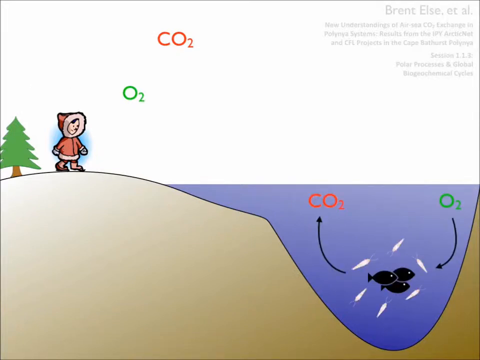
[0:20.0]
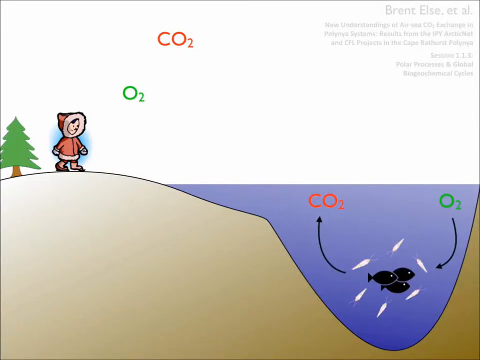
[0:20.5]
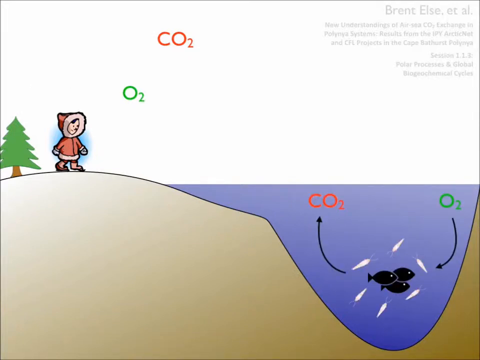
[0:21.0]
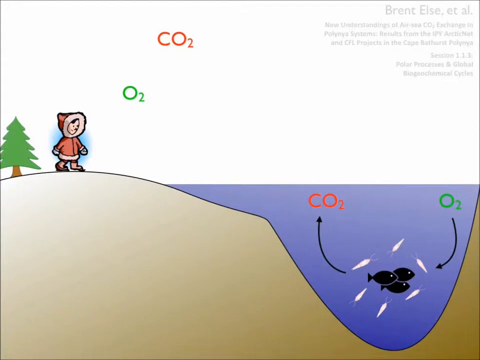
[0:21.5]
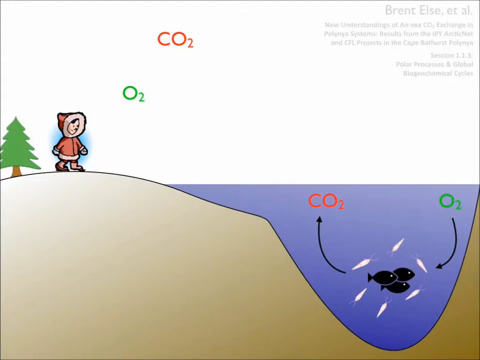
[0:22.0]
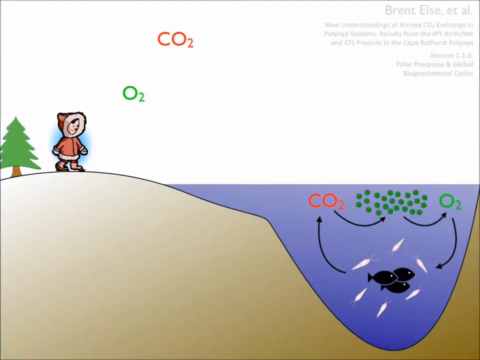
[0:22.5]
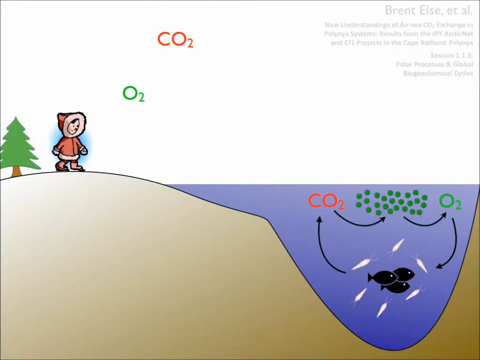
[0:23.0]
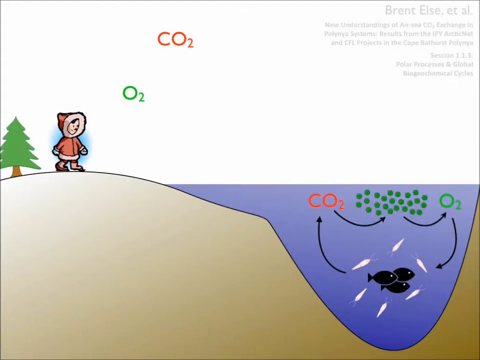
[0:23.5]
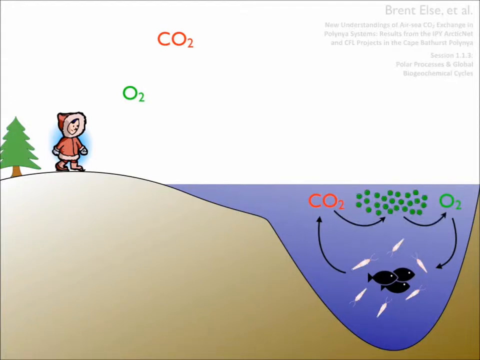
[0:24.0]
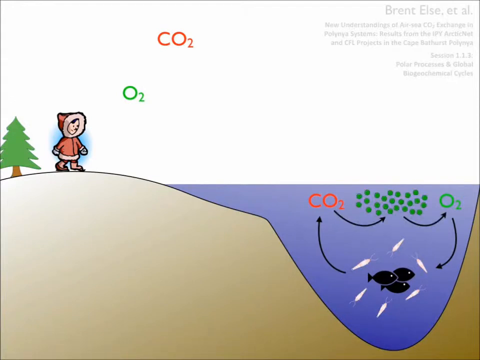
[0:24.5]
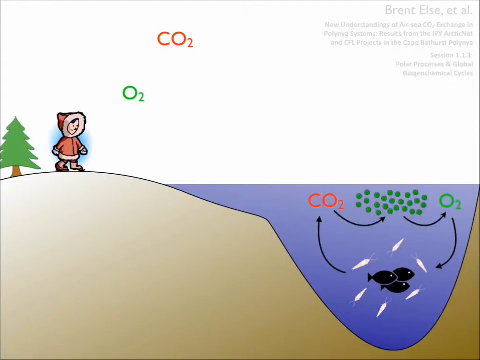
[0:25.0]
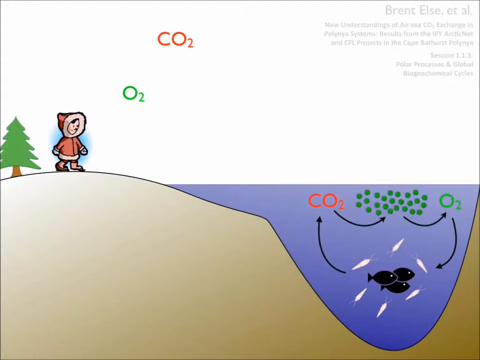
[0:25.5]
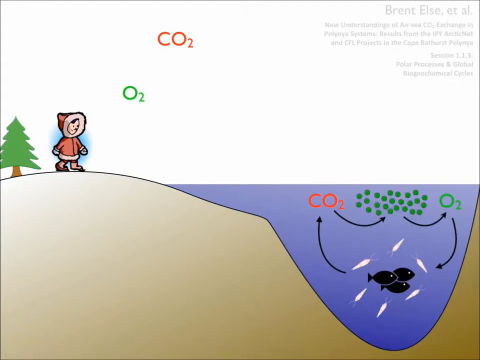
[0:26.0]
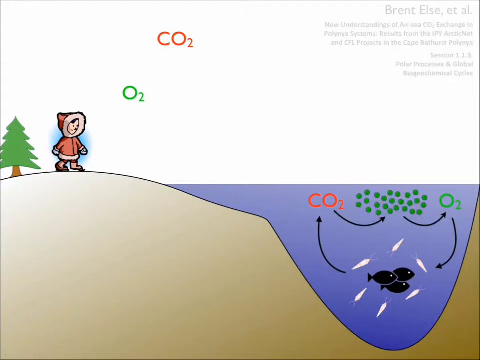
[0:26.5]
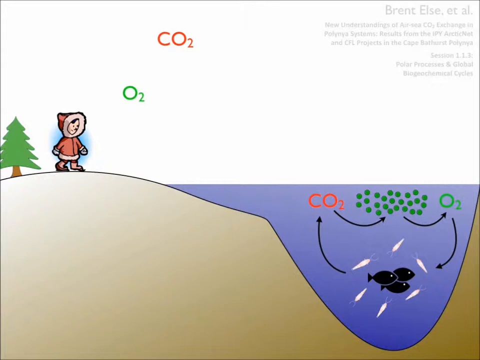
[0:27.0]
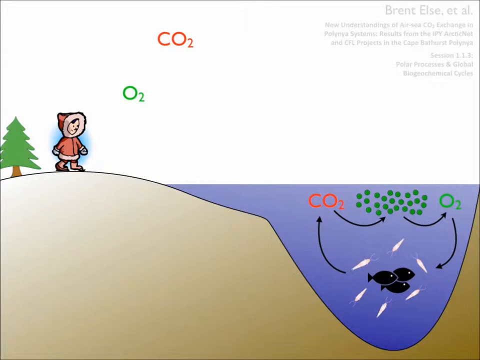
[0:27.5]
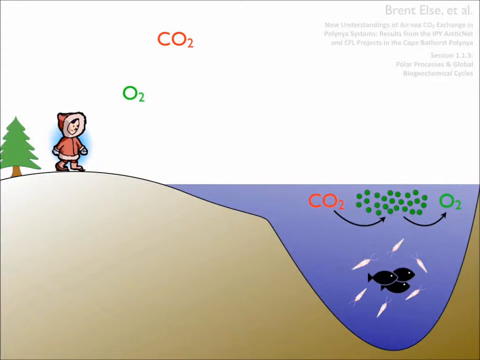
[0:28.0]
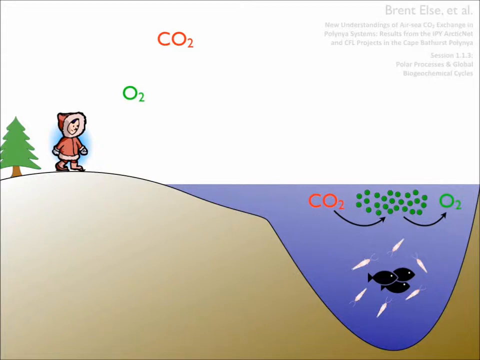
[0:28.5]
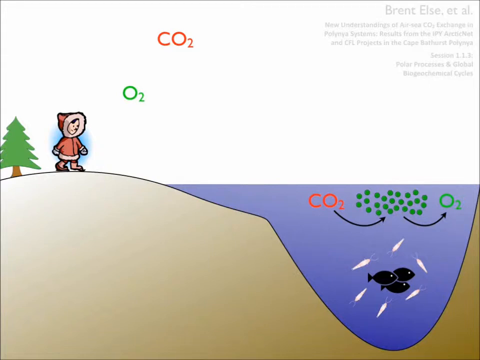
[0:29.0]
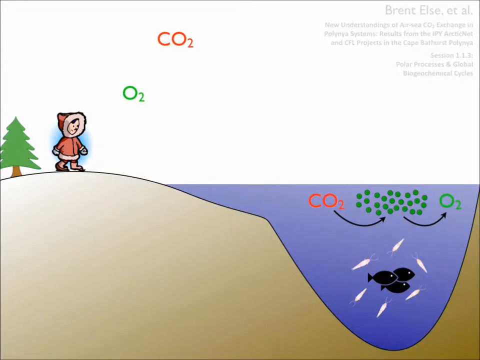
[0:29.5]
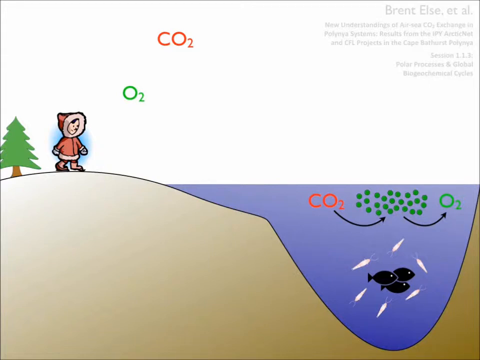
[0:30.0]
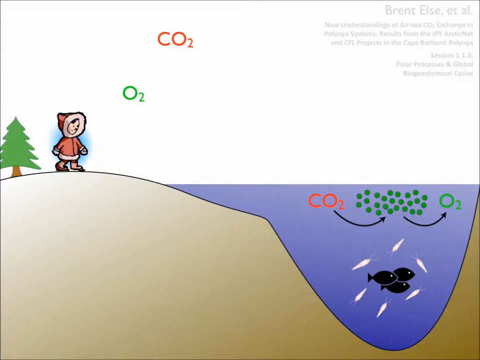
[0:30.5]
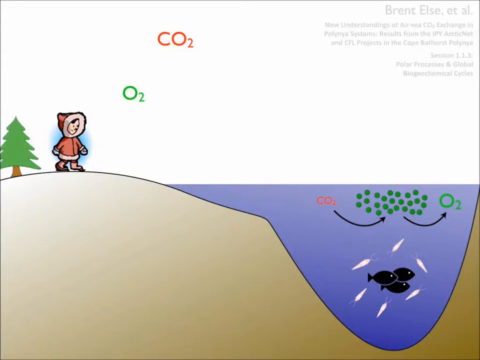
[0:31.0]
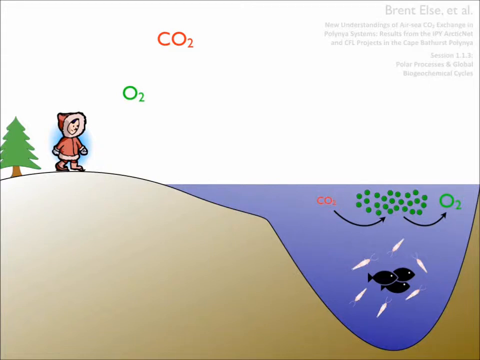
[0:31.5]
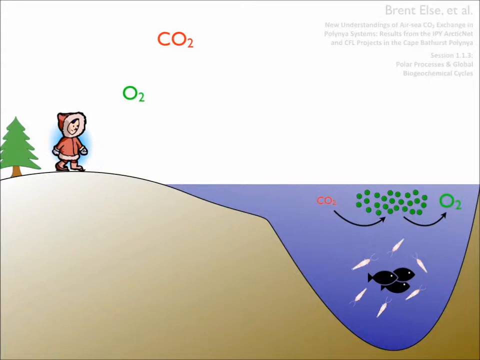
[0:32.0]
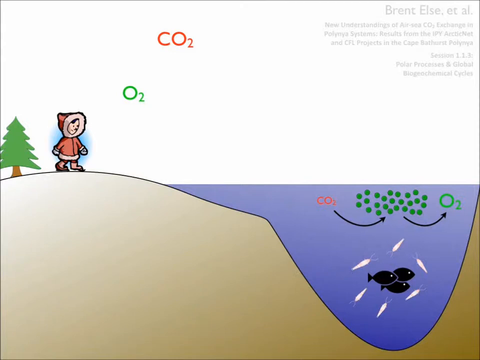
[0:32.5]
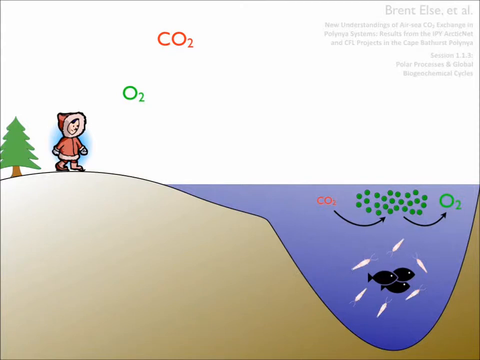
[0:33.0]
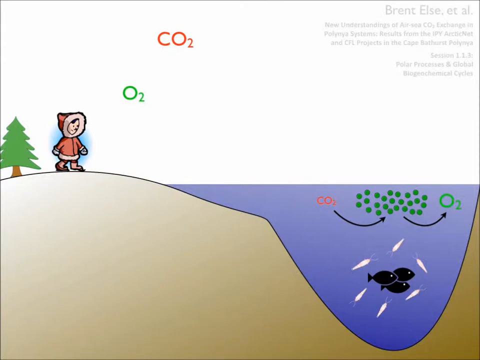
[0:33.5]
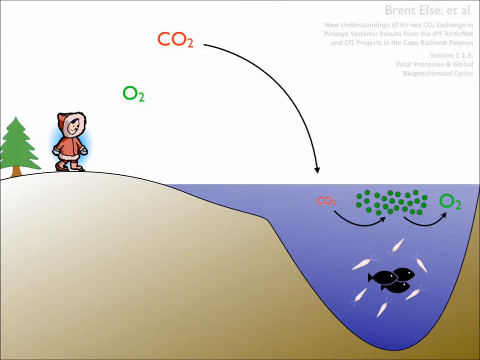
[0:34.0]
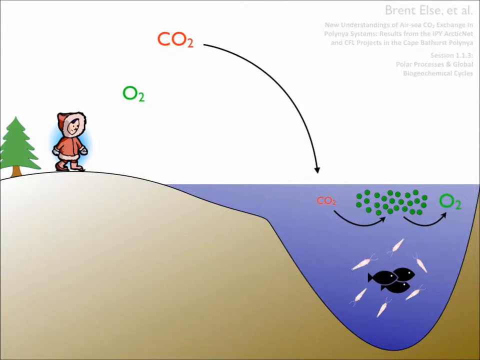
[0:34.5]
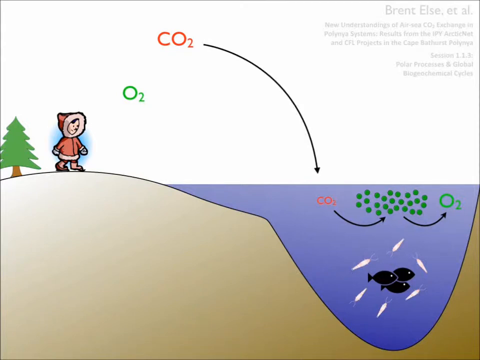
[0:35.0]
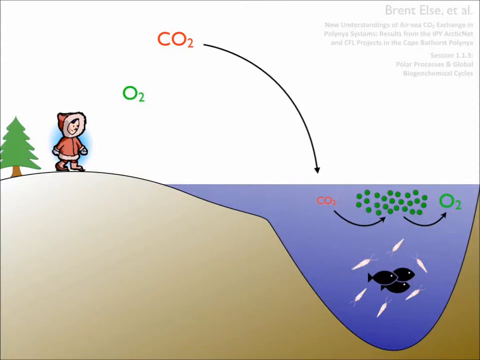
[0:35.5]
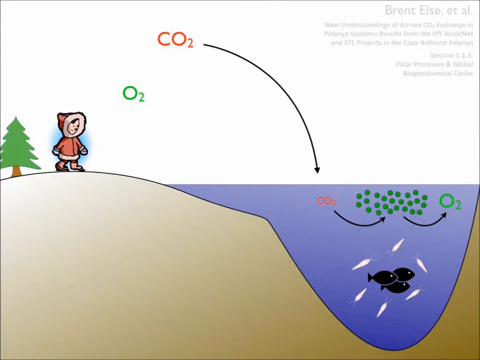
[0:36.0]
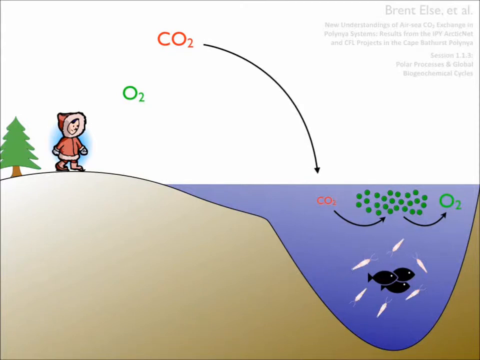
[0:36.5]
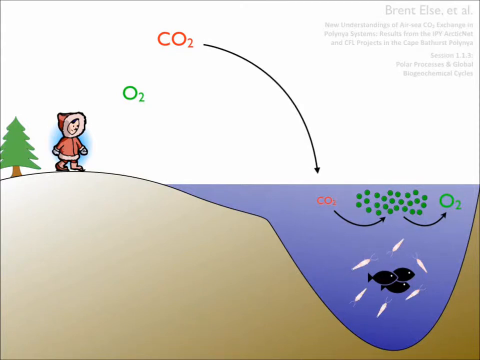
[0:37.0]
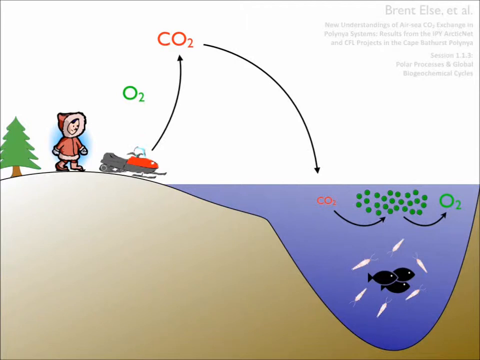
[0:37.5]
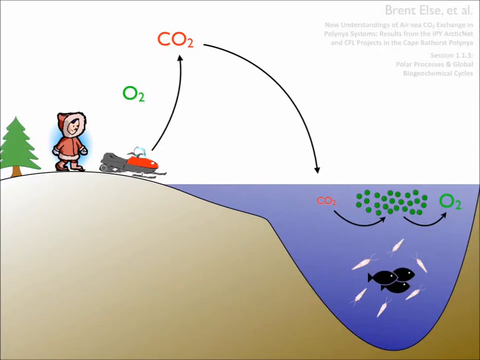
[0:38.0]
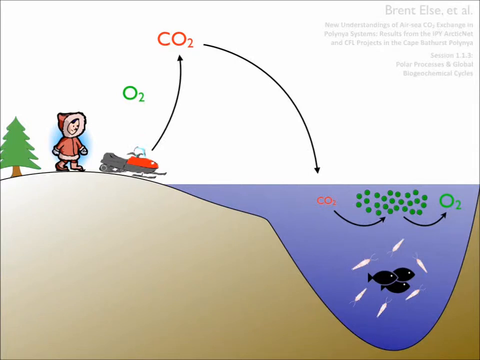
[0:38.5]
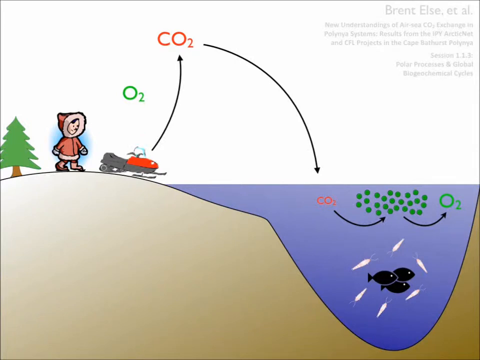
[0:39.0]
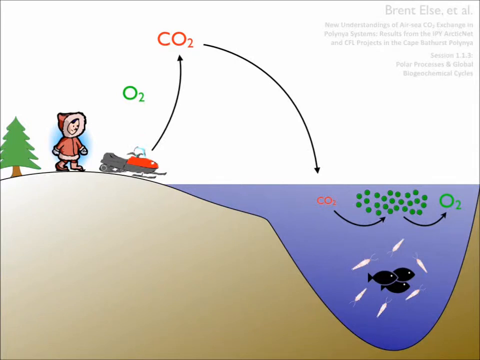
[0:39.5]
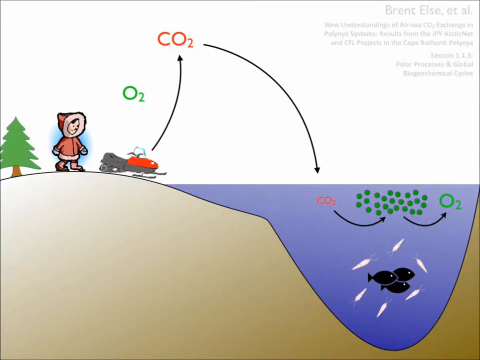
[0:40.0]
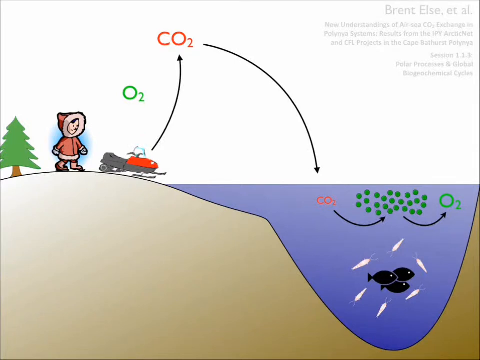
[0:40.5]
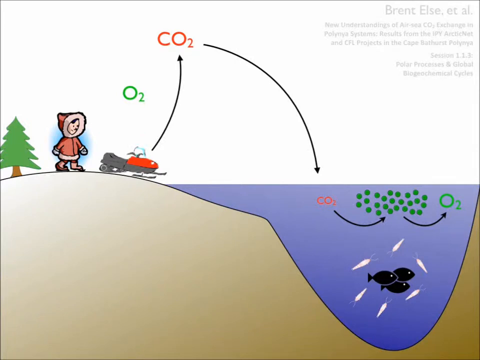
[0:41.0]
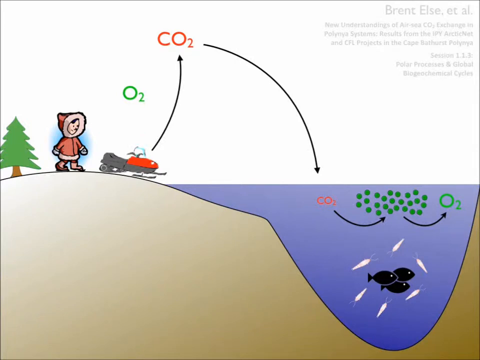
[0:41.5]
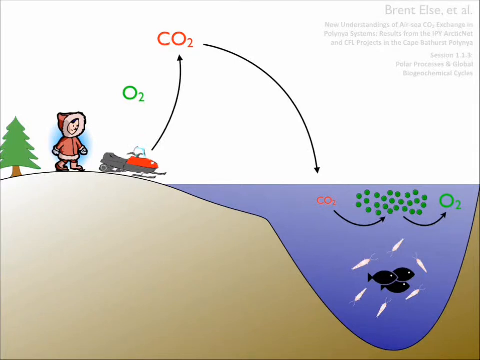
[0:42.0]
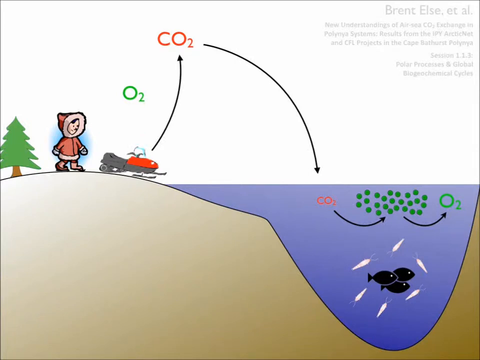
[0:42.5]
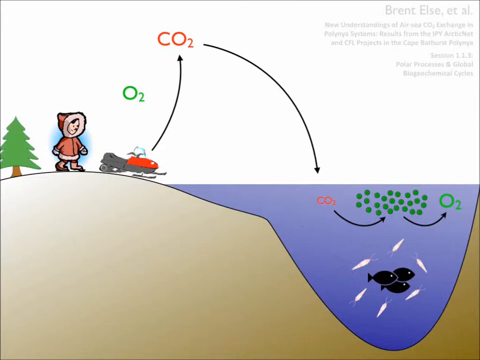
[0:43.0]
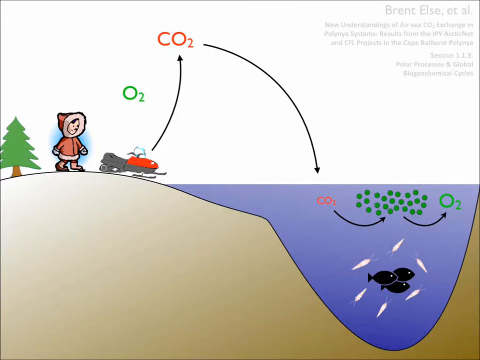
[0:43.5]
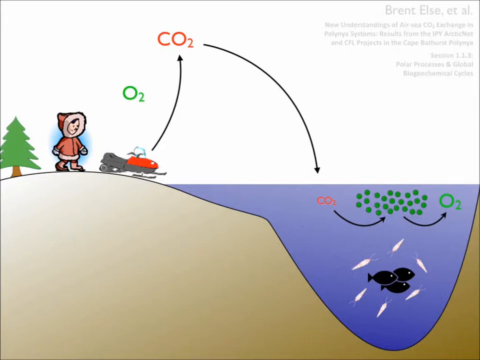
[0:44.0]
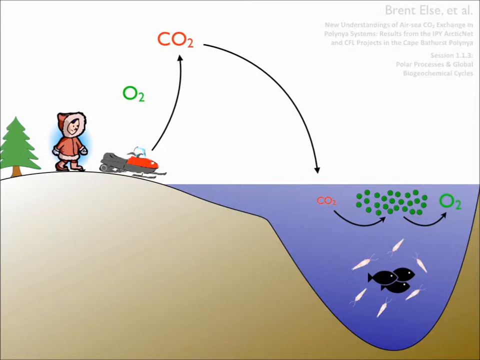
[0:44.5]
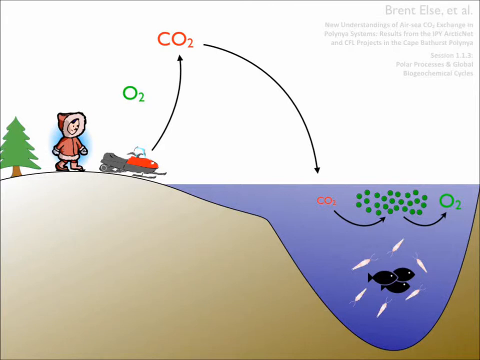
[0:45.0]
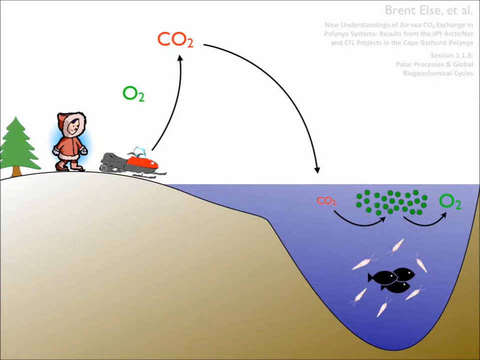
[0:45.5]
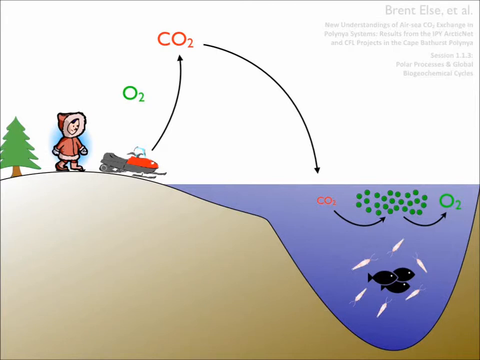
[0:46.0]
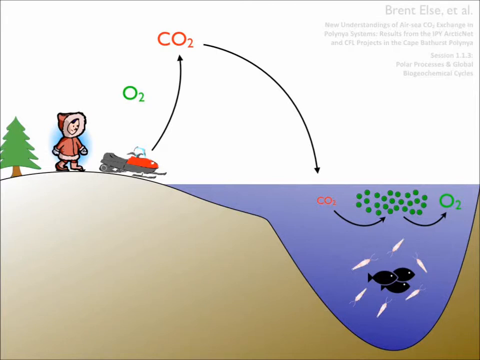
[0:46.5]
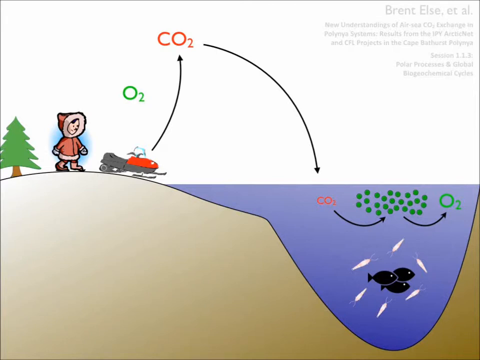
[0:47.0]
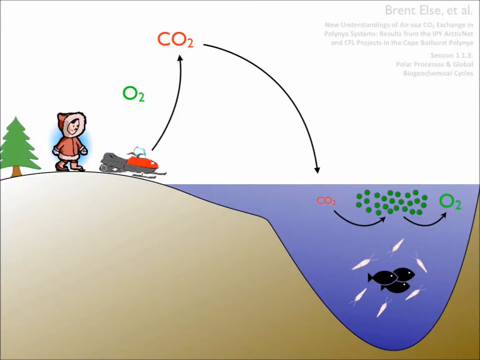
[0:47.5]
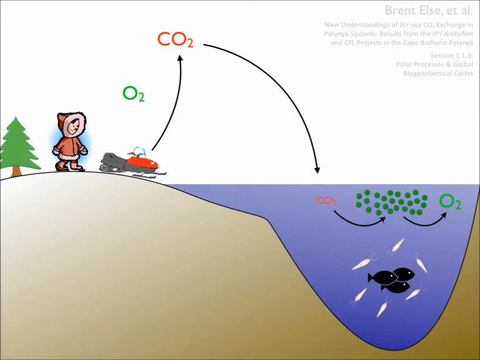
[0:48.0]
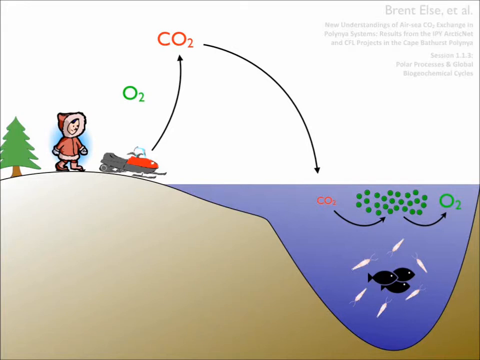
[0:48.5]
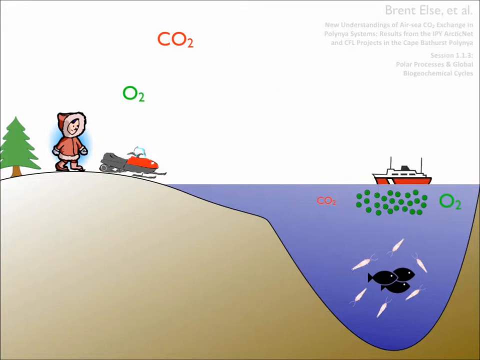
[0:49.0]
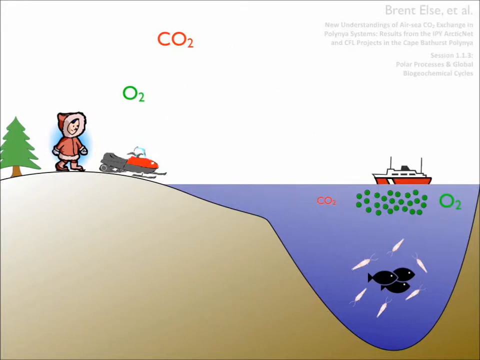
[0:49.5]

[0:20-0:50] Green dots appear in the water. A black arrow runs from the red CO2 to the green circles, and another black arrow leaves the green circles and goes to a green O2. The black arrows disappear from the fish. A big red CO2 appears in the sky, with a big arrow pointing downward into the water at the small CO2. An orange snowmobile appears on the edge of the water next to the girl, and a long black arrow appears going from the snowmobile up to the red CO2 in the air. A few moments later, a white ship with a red hull appears, resting on the water above the green circles. The diagram shows the cycle of how oxygen and carbon dioxide are transferred.